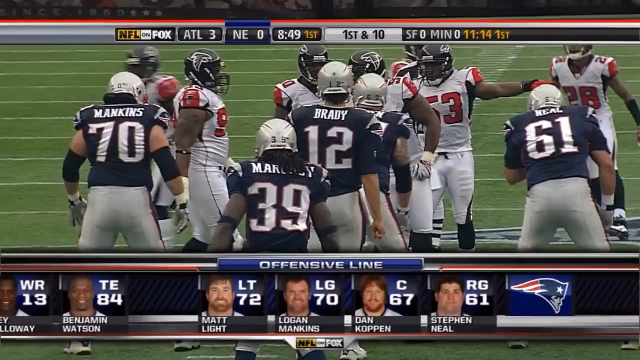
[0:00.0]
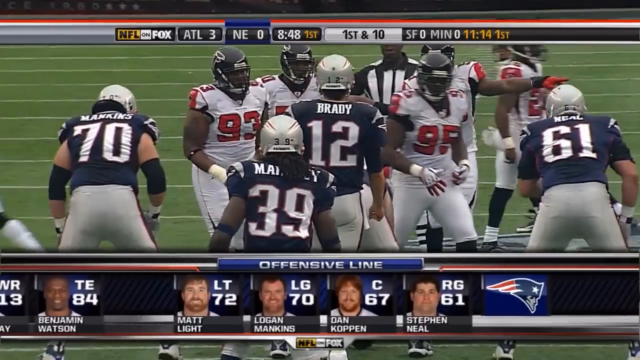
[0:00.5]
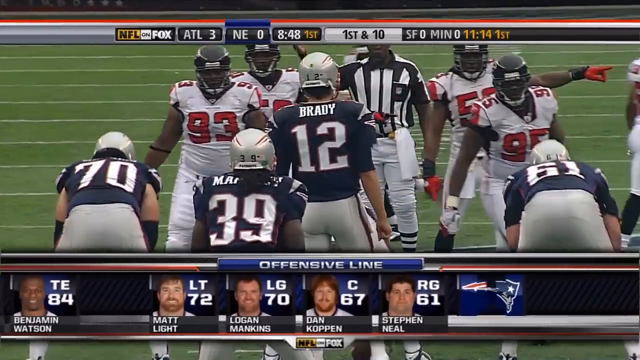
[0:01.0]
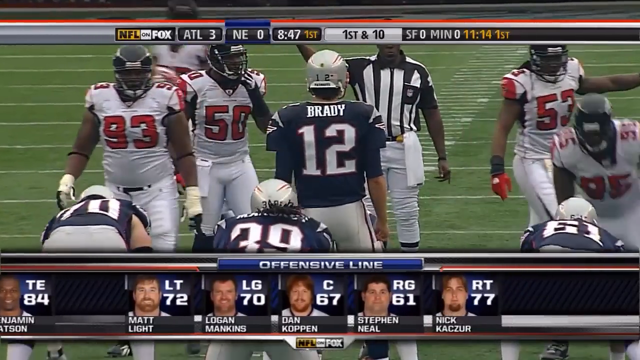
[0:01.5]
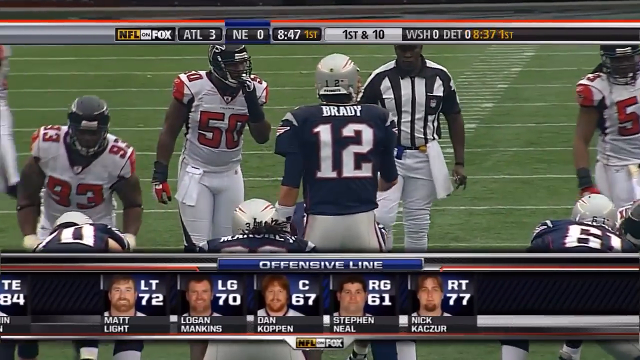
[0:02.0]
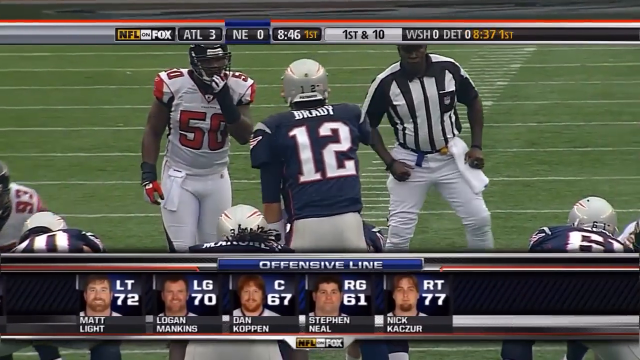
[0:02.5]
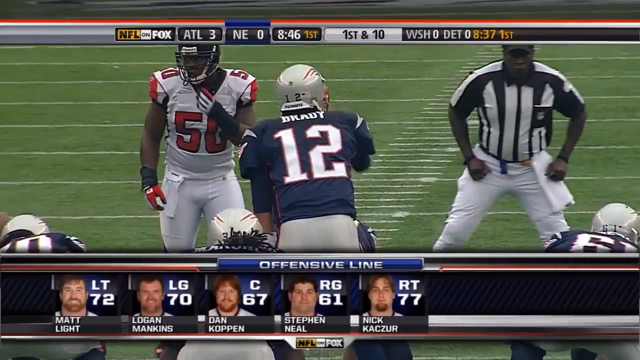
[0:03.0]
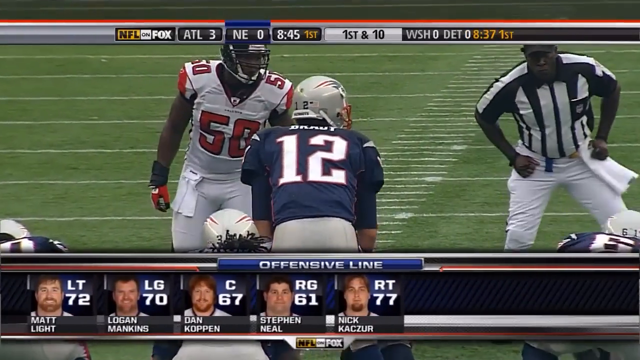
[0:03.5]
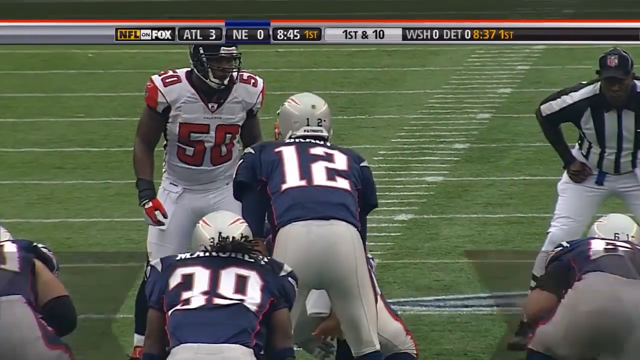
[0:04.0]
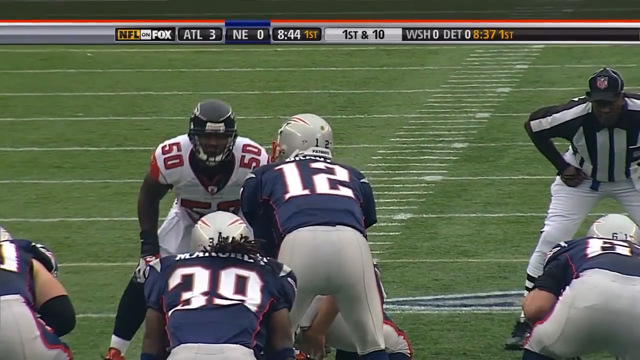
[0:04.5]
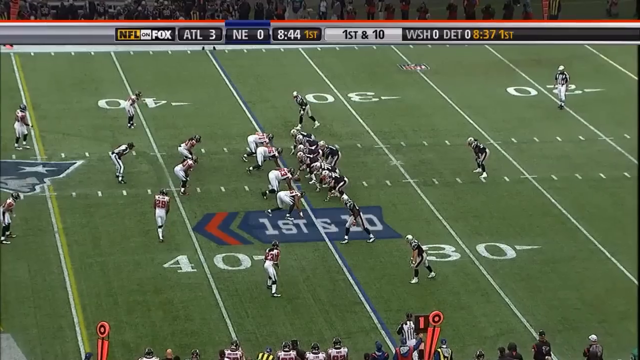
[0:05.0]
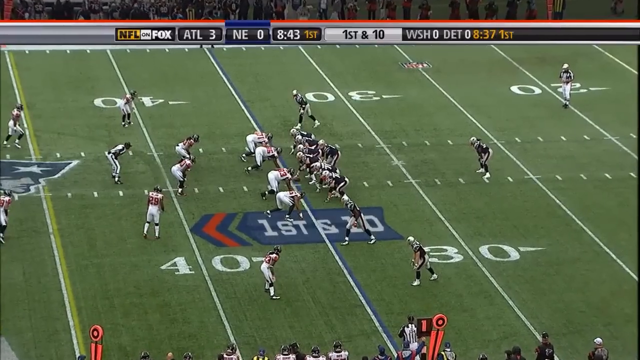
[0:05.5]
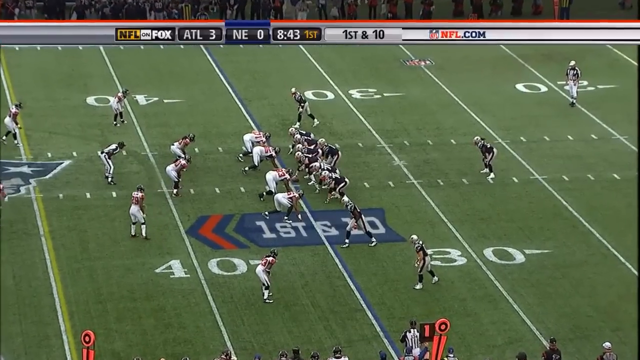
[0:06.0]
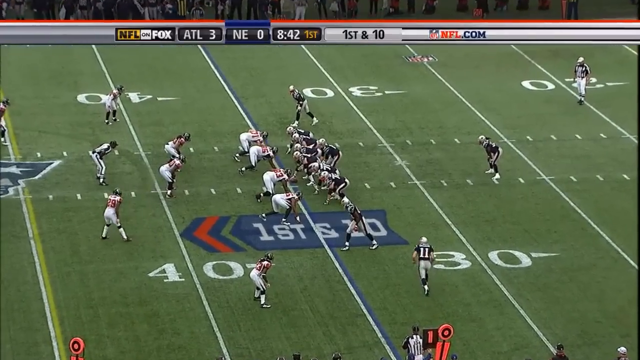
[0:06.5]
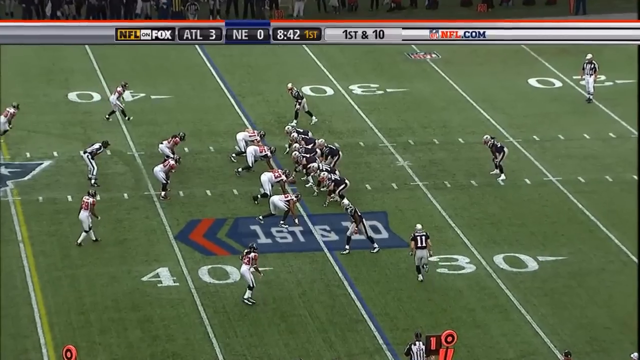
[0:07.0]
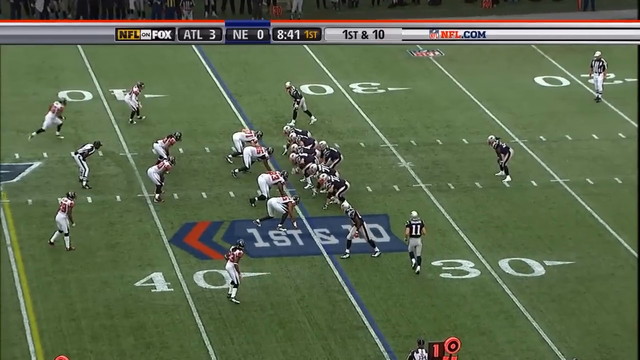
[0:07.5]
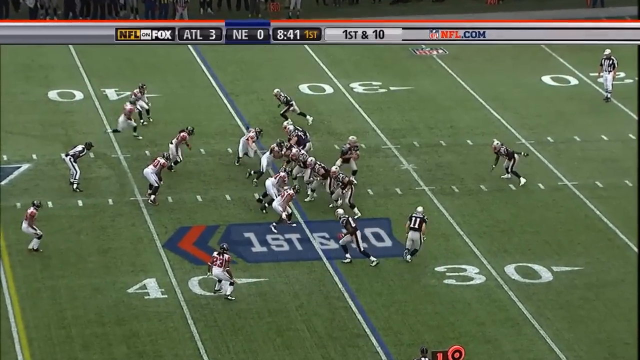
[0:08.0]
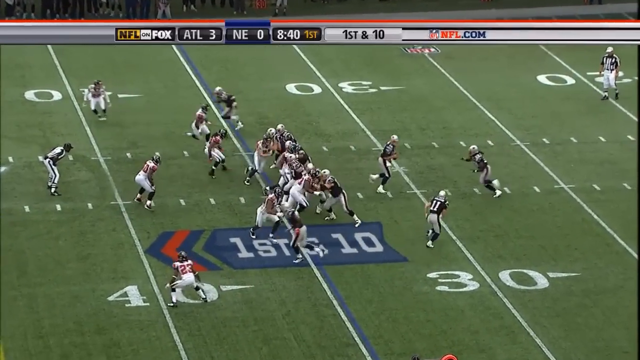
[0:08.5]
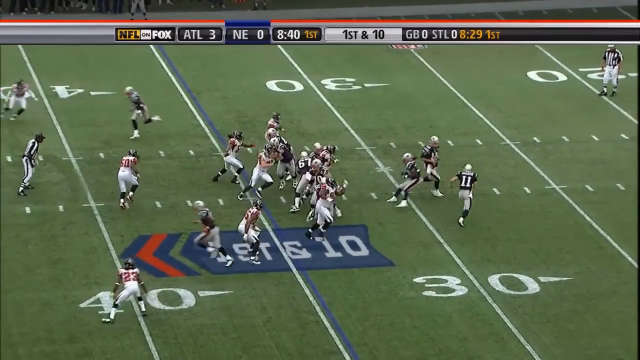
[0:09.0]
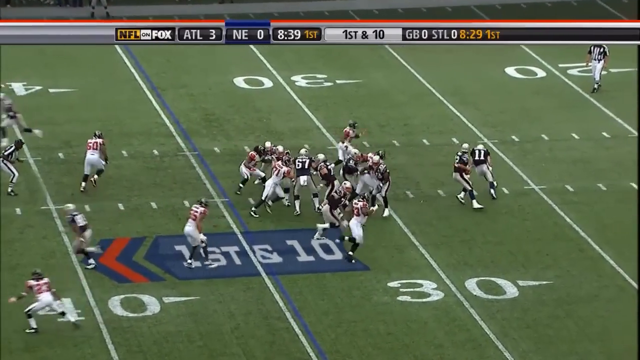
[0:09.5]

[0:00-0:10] The footage appears to show the New England Patriots, with Tom Brady, playing against the Atlanta Falcons. The game is broadcast on Fox, with the "NFL on Fox" logo in the top left. The Atlanta Falcons lead 3 to New England's 0, and it is the first quarter with 8 minutes and 49 seconds remaining. Several offensive linemen are visible, such as Matt Light, Logan Manning, Dan Kopin and Stephen Neal, along with receivers such as Benjamin Watson, a tight end. Tom Brady wears number 12. He walks up to his center to take the ball. The Patriots are down on their own end, and it is first and 10.